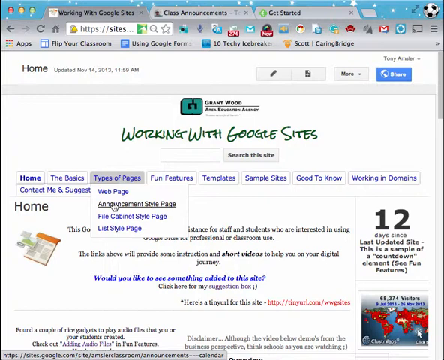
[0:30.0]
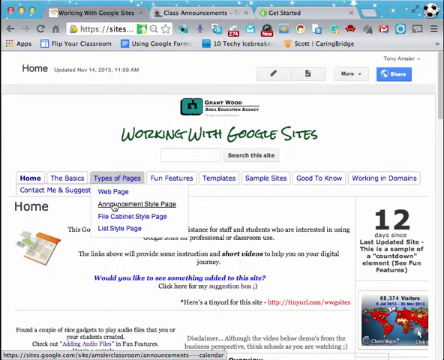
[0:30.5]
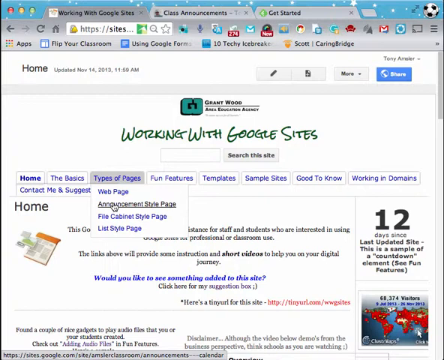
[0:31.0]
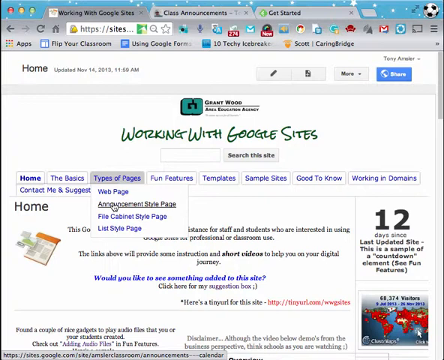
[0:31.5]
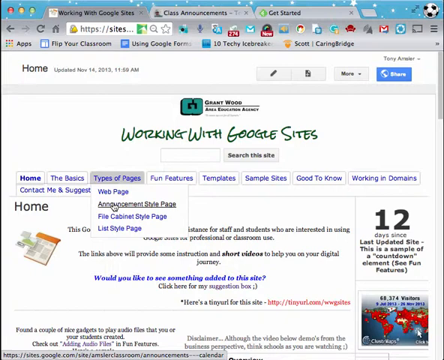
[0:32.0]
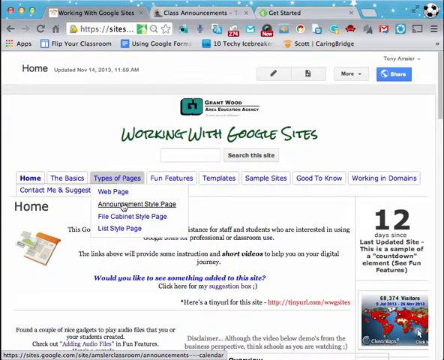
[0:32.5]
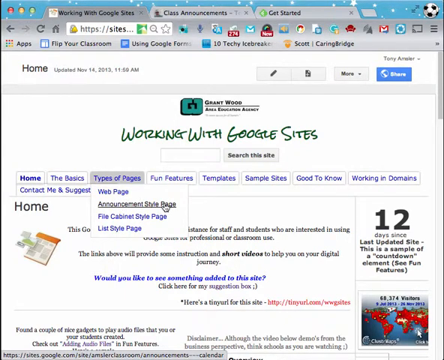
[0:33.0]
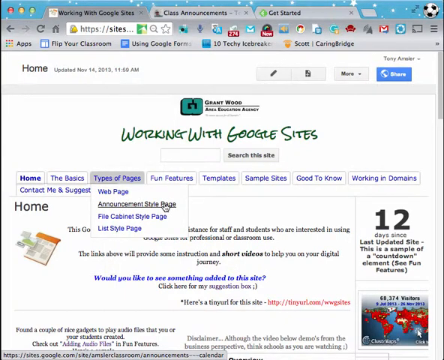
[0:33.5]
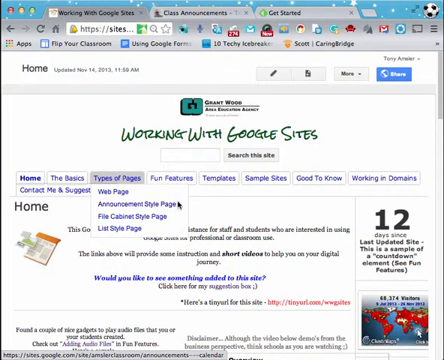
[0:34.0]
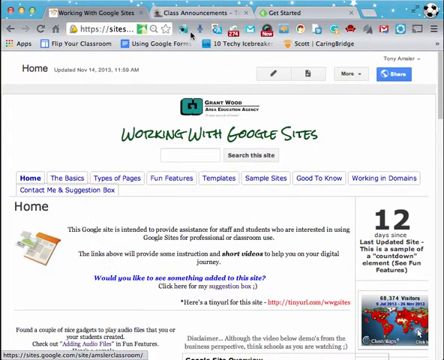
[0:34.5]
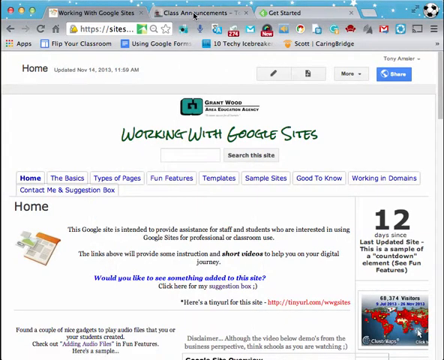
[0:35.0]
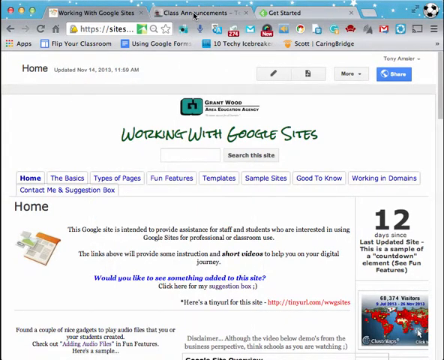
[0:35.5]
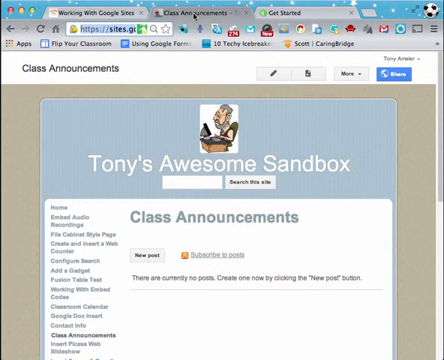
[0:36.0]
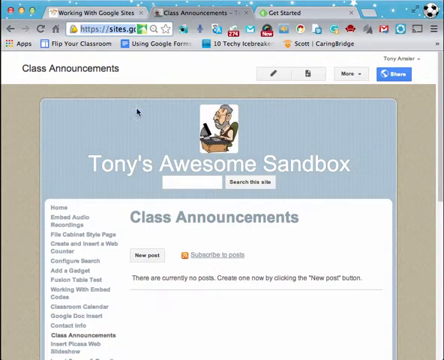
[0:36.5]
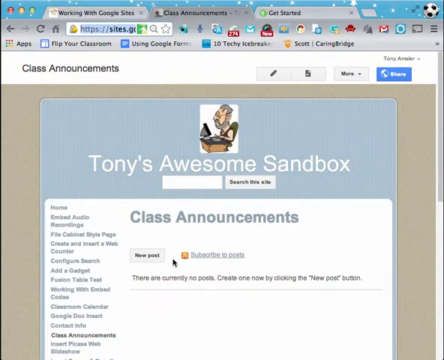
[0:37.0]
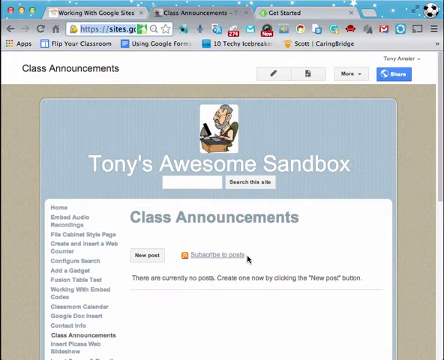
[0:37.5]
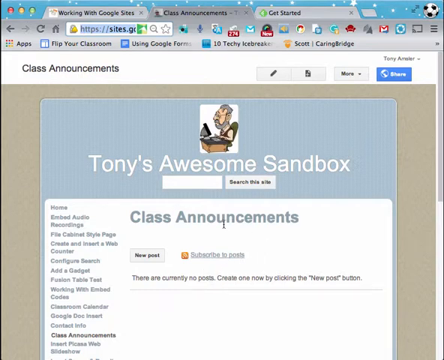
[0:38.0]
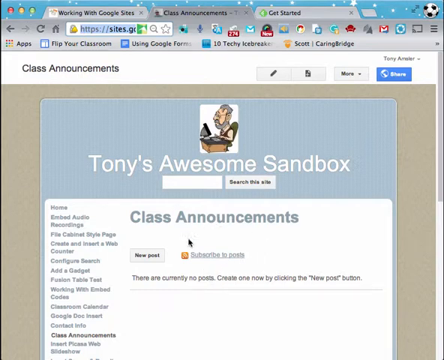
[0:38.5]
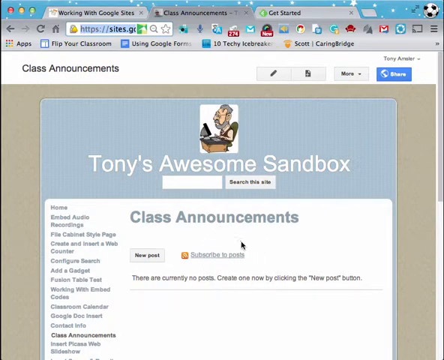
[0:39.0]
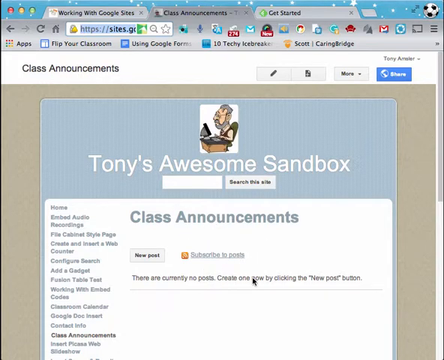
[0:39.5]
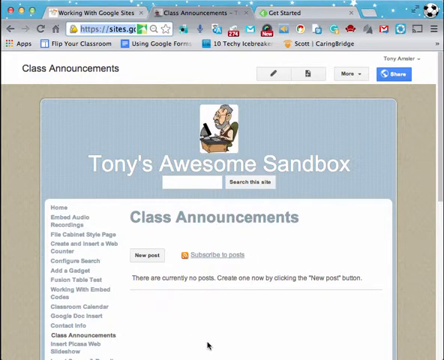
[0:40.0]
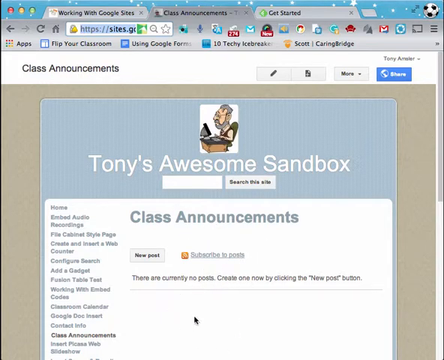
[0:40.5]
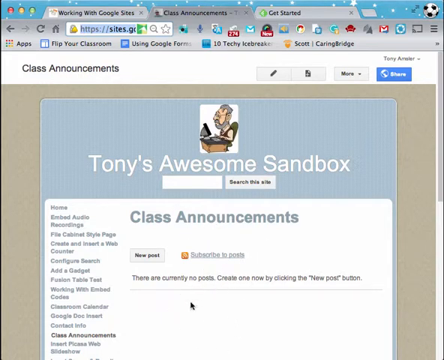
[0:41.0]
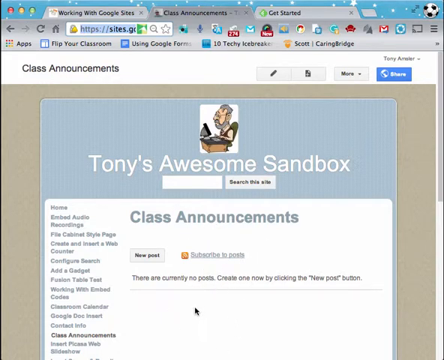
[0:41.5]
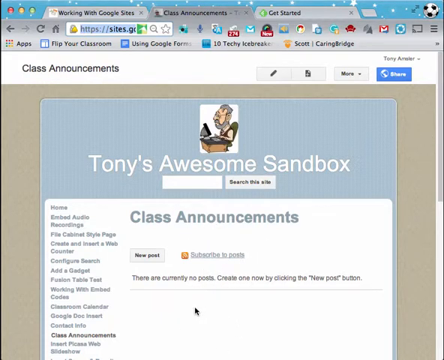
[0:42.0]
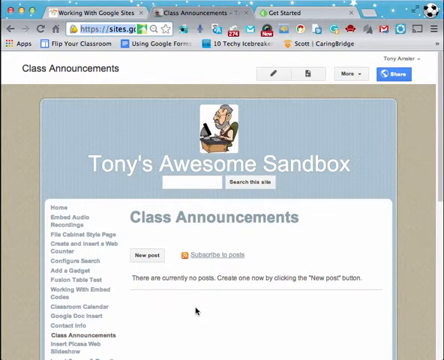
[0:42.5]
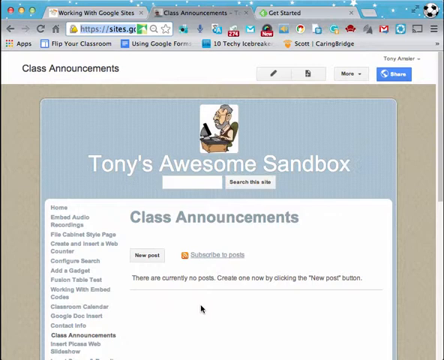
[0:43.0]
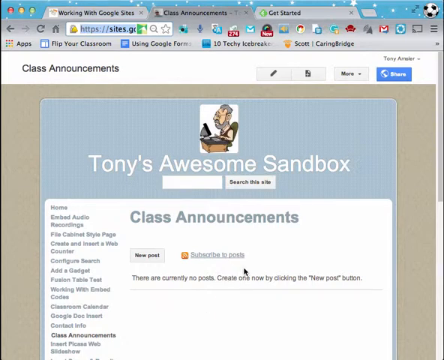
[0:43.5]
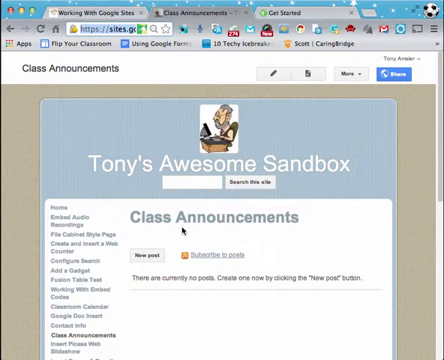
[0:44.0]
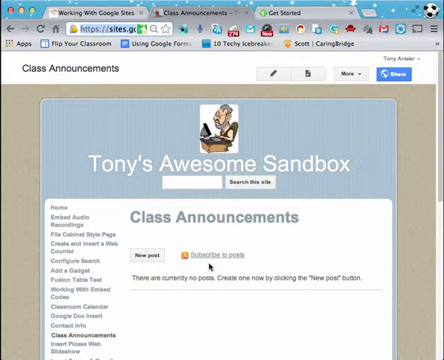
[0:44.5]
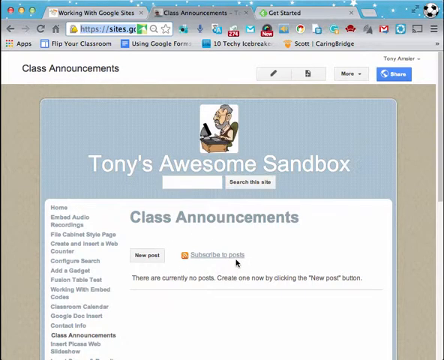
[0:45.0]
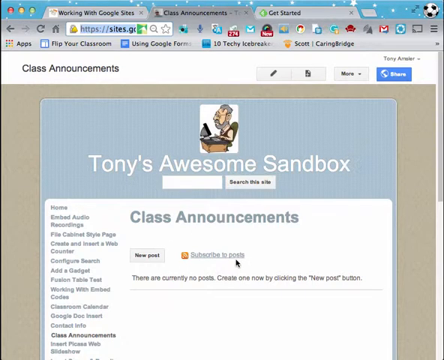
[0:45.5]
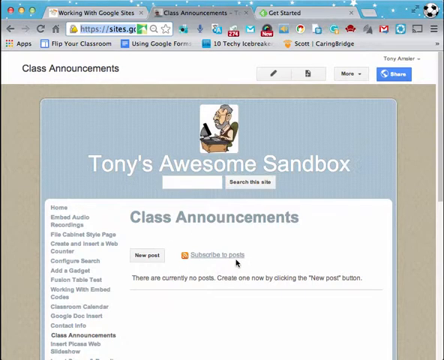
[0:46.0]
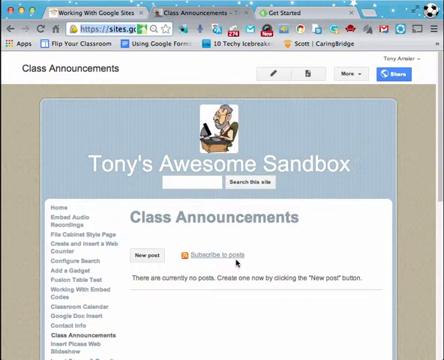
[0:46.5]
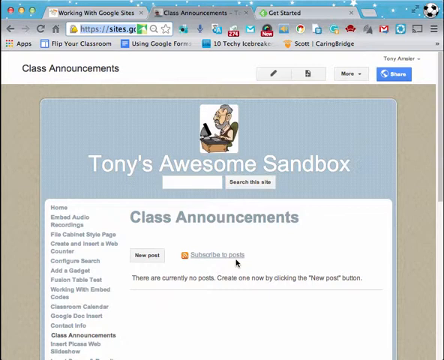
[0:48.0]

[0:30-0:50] The user selects "Announcement Style Page" and then switches tabs, clicking on Class Announcements. "Tony's Awesome Sandbox" appears in white, apparently the name of a teacher. At the top of the website is a picture of an older man sitting at a desk with a computer. Under the picture is a search box reading "Search this site" and "Class Announcements" in blue. A light blue button says "New post" in black, and a blue link says "Subscribe to posts." Under that, black text reads "There currently no posts. Create one now by clicking the new post button." Off to the left is a list of tabs; the first five are Home, Embed Audio, Recordings, File Cabinet Style Page, and Create and Insert a Web.